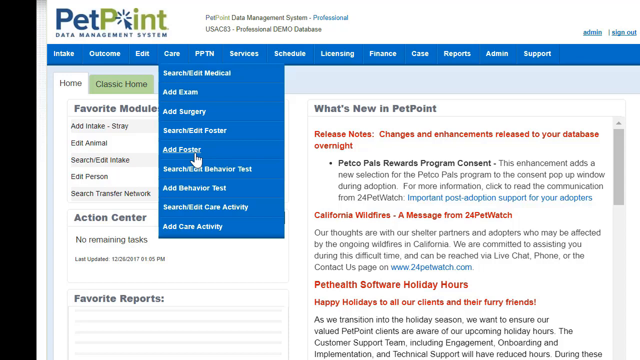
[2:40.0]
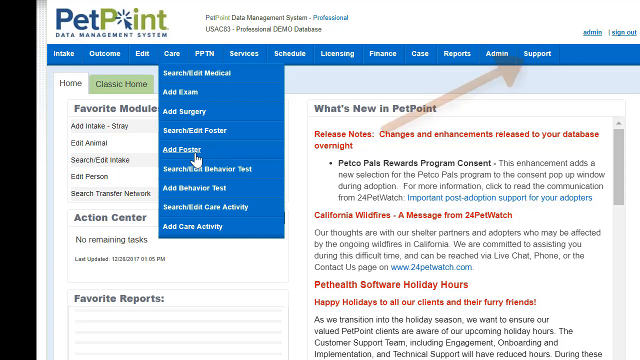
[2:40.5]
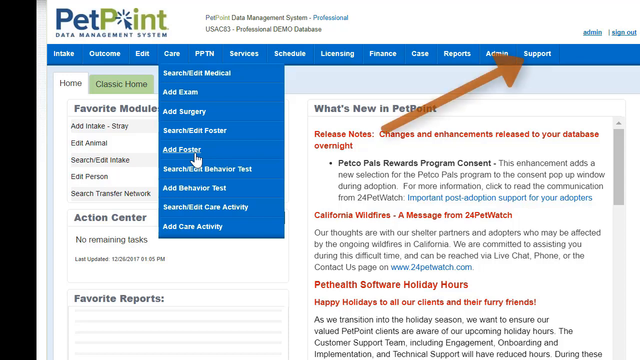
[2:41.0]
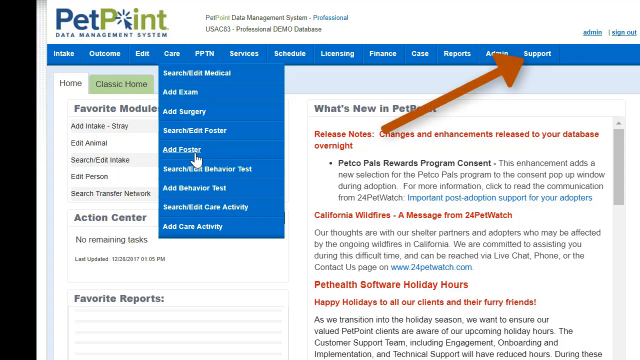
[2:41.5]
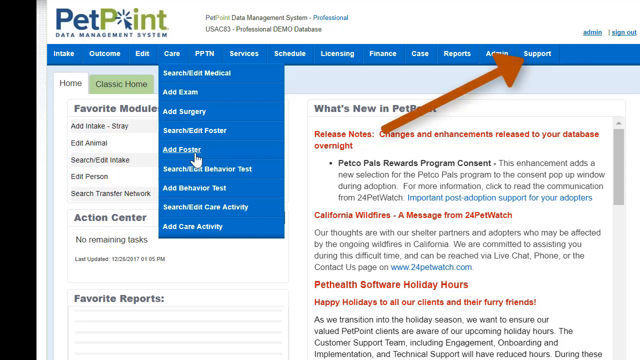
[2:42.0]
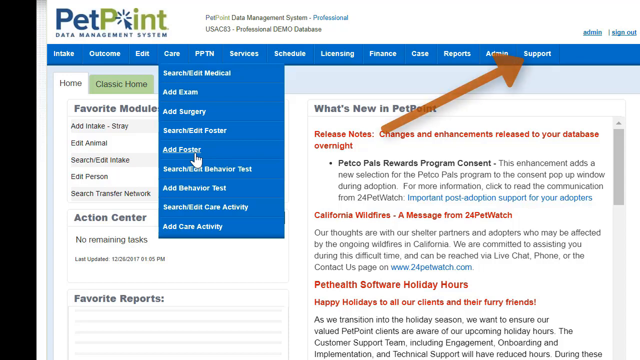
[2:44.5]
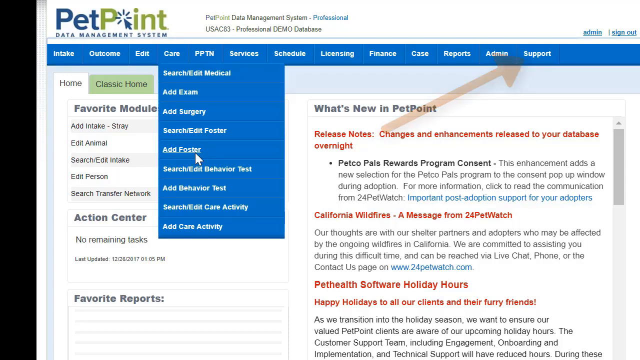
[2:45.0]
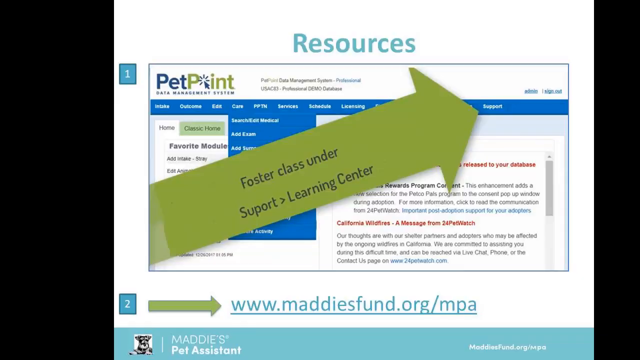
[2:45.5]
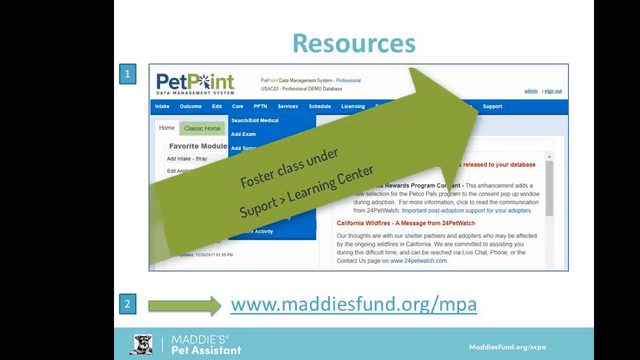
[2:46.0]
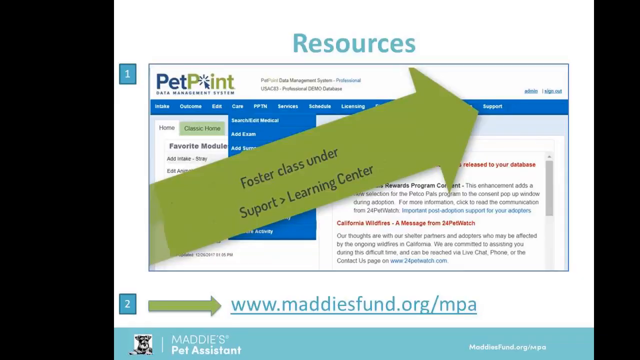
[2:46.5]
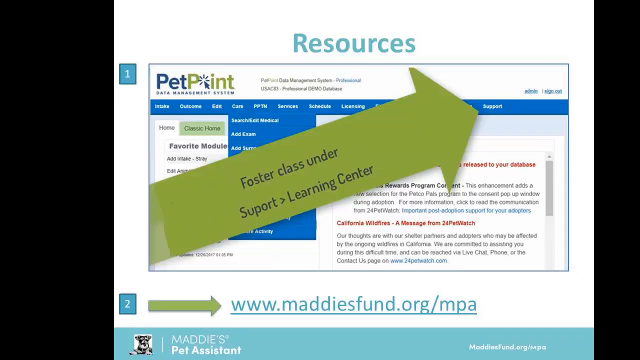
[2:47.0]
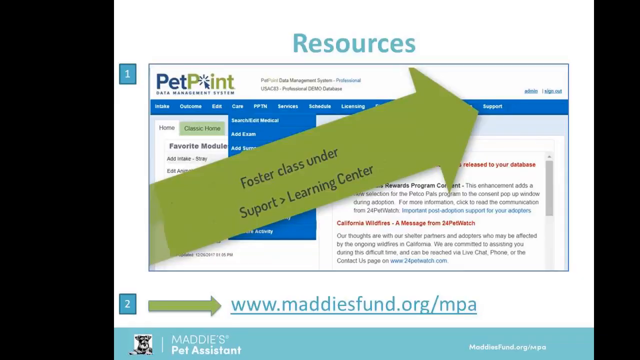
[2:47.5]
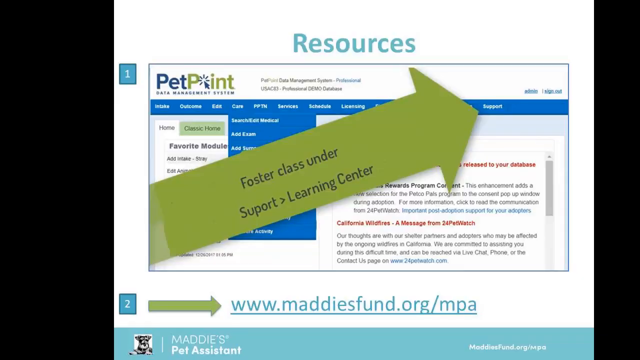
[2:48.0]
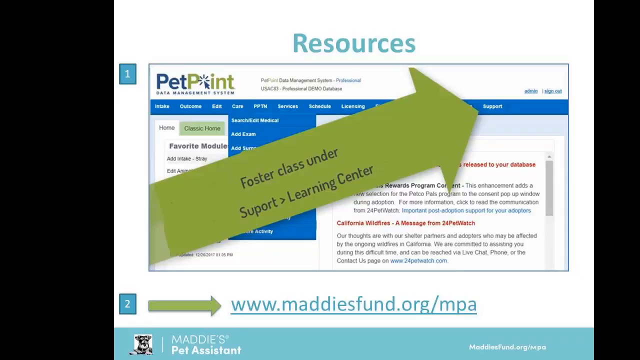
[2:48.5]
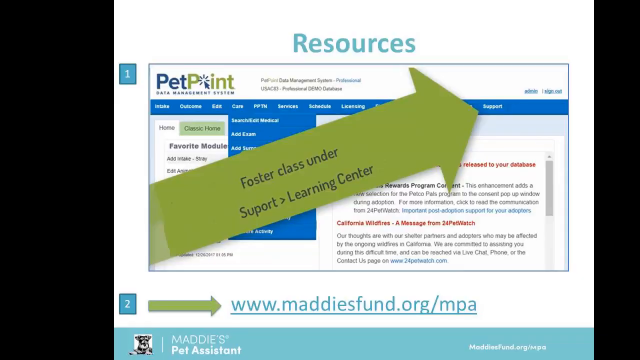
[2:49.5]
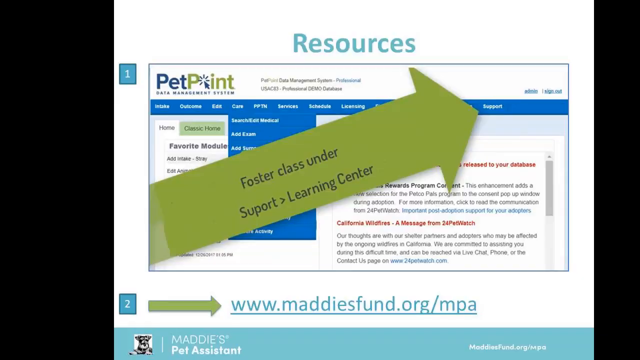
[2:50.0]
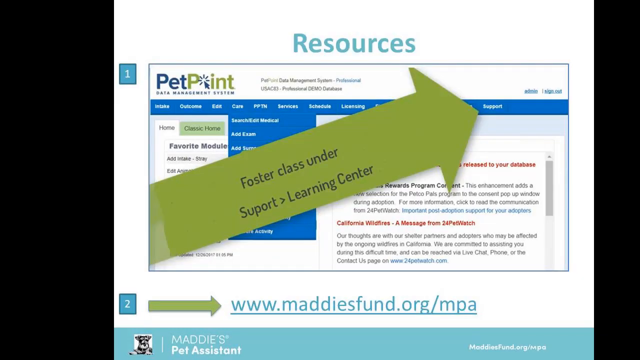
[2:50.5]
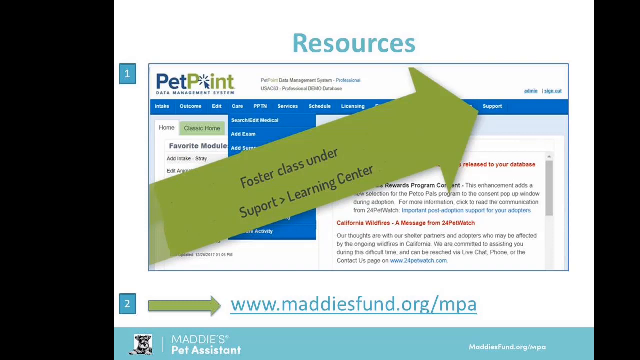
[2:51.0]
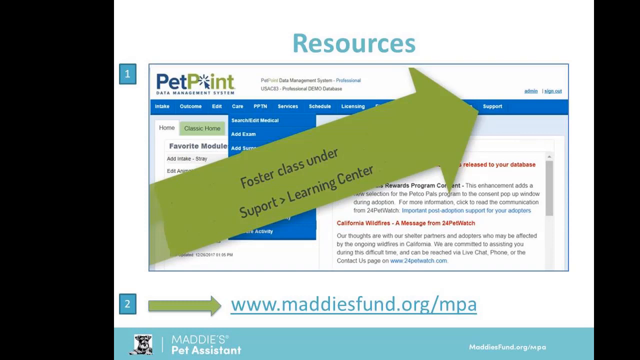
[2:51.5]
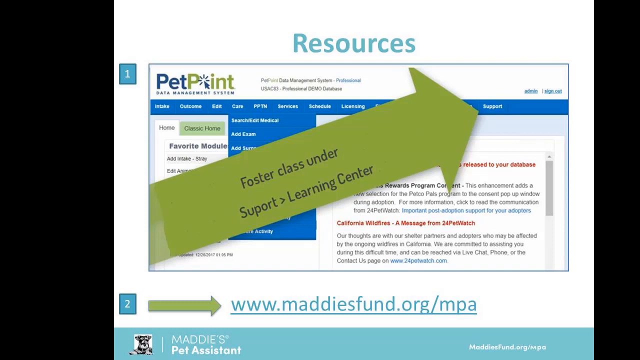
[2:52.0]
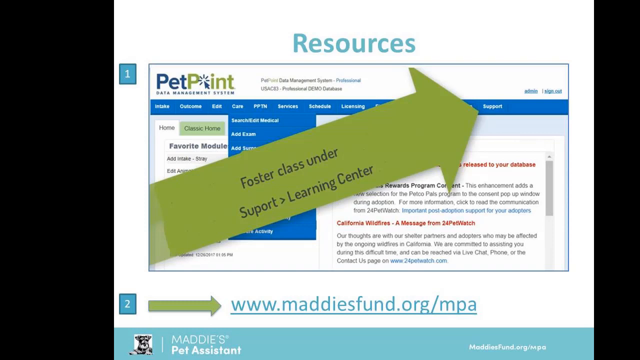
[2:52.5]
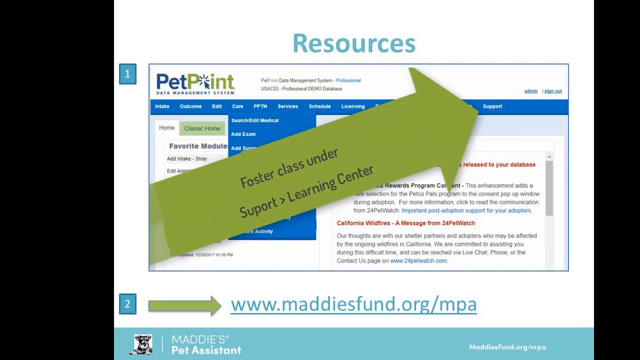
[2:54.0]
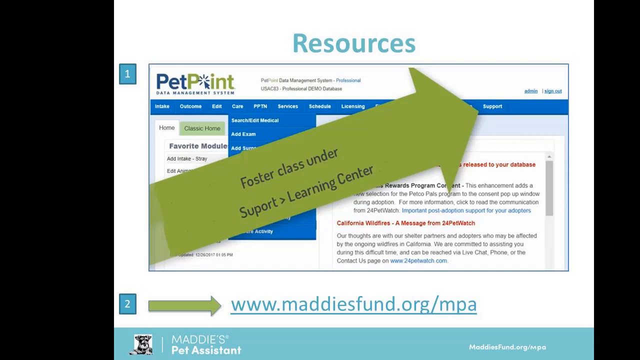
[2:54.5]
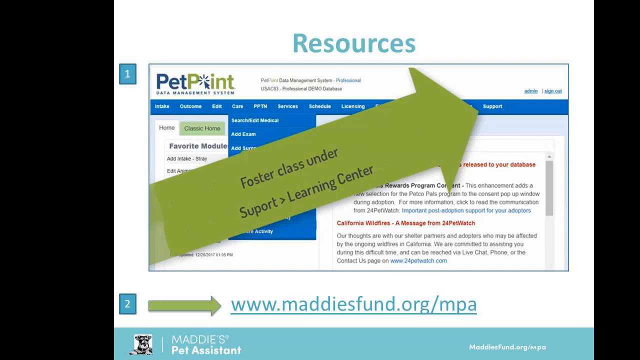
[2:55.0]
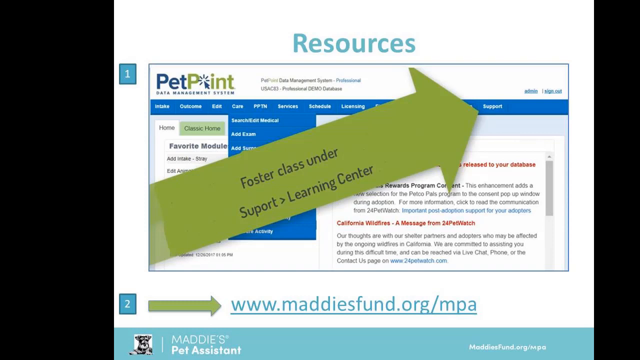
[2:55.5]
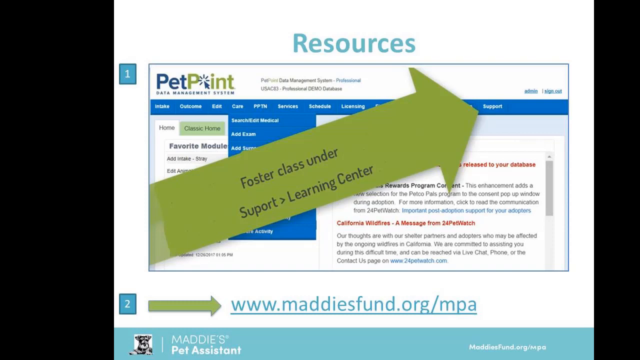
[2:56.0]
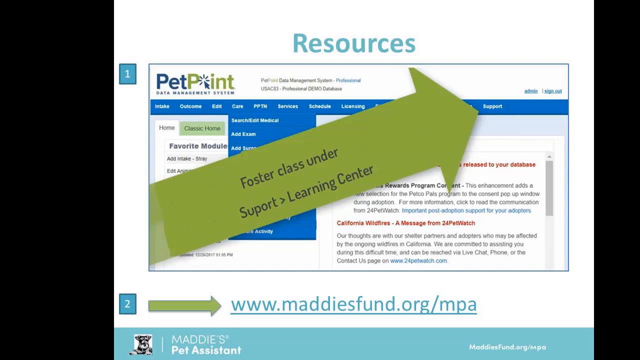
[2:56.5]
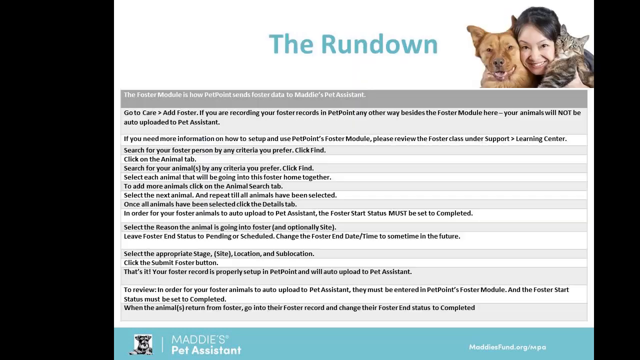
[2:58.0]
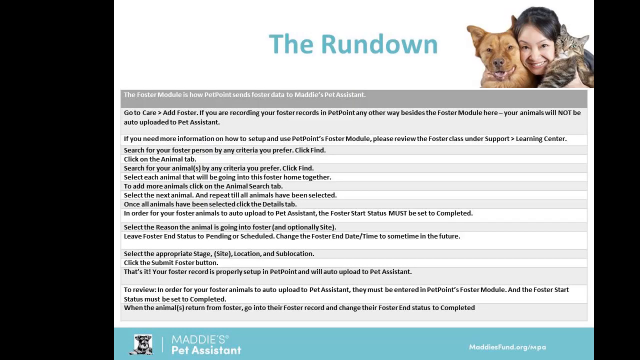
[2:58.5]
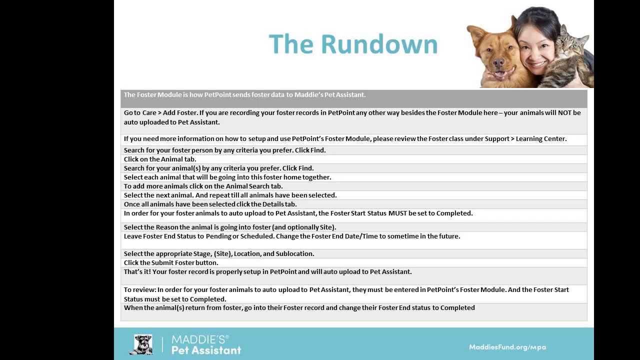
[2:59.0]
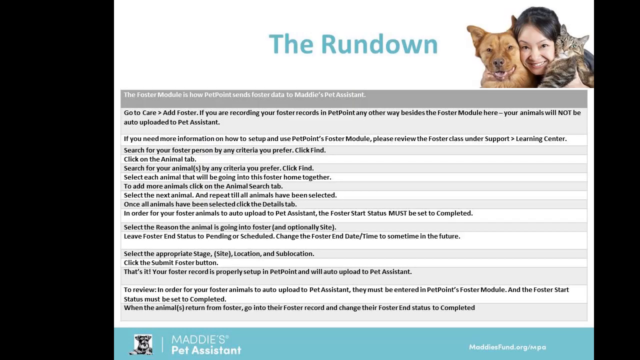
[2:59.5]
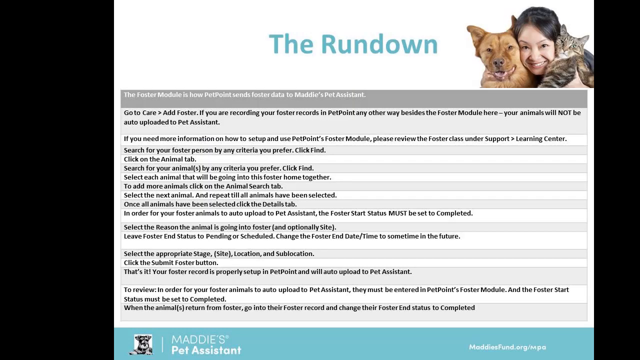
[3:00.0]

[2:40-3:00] The PetPoint website's homepage is shown with the drop-down menu under the Care option in the navigation menu displaying all of its options. A large red arrow points to the Support option, the very last link in the top navigation menu. The cursor clicks the Add Foster option in the drop-down menu under Care. A screenshot image of the website then appears, labeled "Resources" at the top, with a number 1 and number 2 labeling on the left side of the image. Under number 1 is the screenshot of the PetPoint website with the drop-down menu under Care showing all of the options, and a very large, thick, olive-gray arrow, kind of coming from the left-hand corner of the screenshot, points to the Support option in the top navigation; in black text on this arrow it says "Foster Class under Support Learning Center." Next to the number 2 labeling, a small olive-green arrow points to the right, to the web address "www.maddiesfund.org/mpa." Another image follows, with "rundown" at the top and an image of an Asian woman holding a brown dog and a gray cat. It seems to give instructions from beginning to end on how to use the foster module to send data to Maddie's Pet Assistant, as a chart giving each step that was shown in the video.